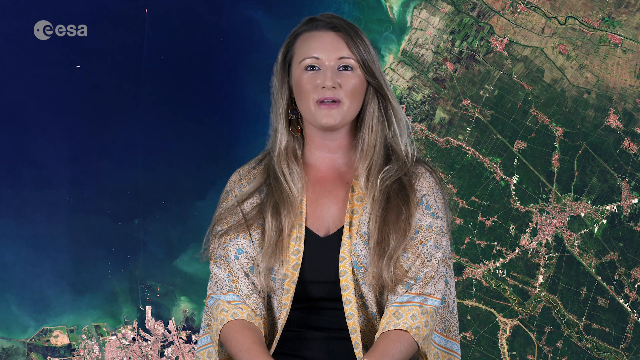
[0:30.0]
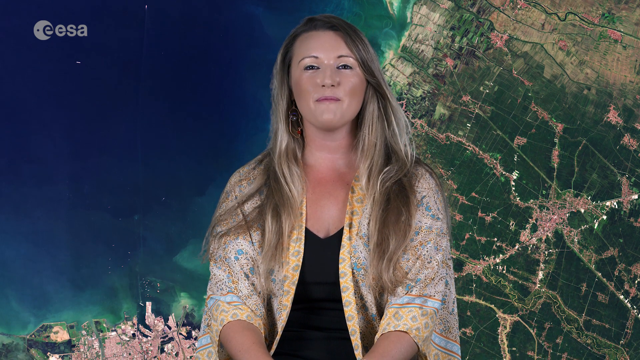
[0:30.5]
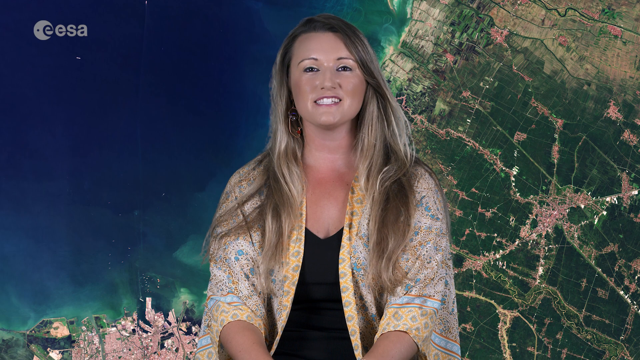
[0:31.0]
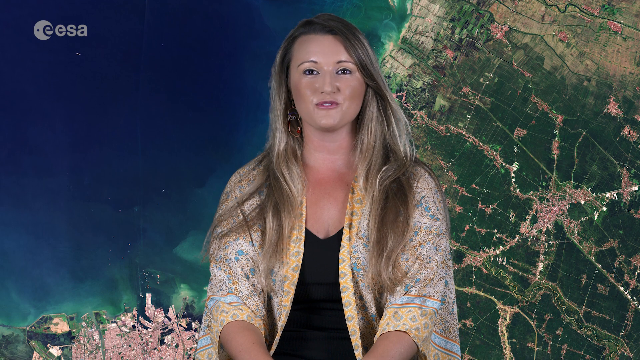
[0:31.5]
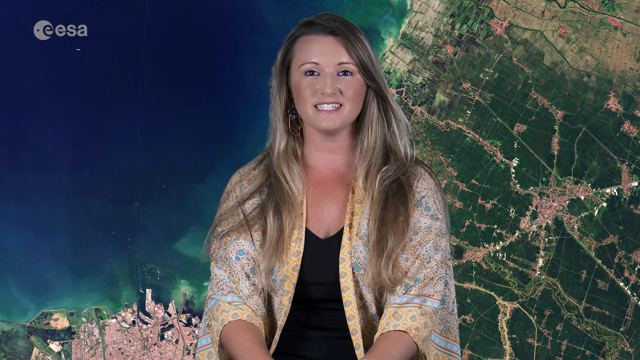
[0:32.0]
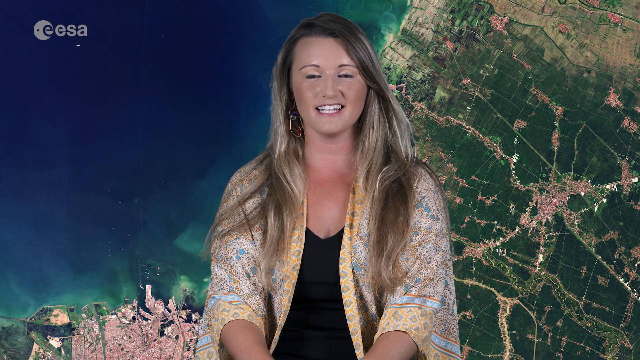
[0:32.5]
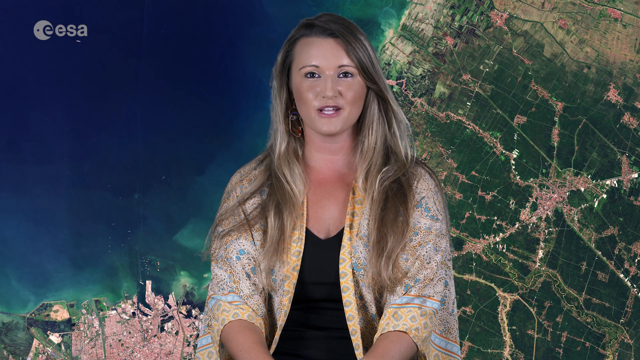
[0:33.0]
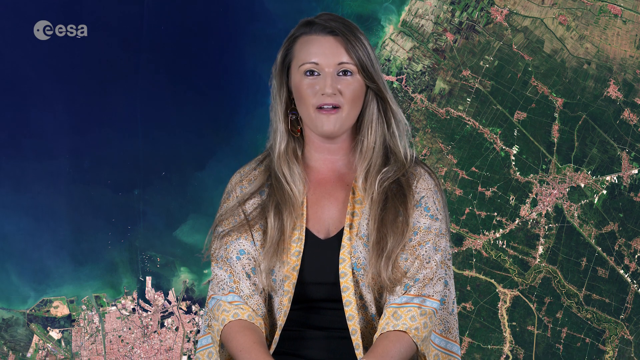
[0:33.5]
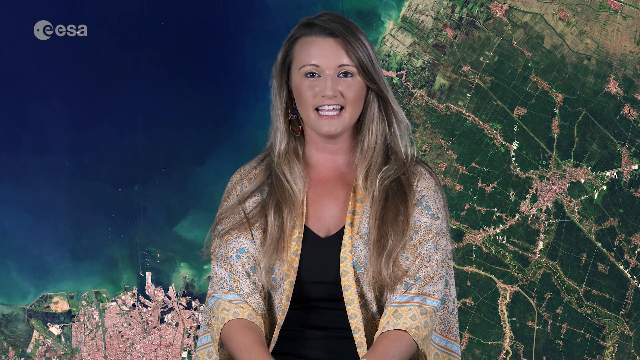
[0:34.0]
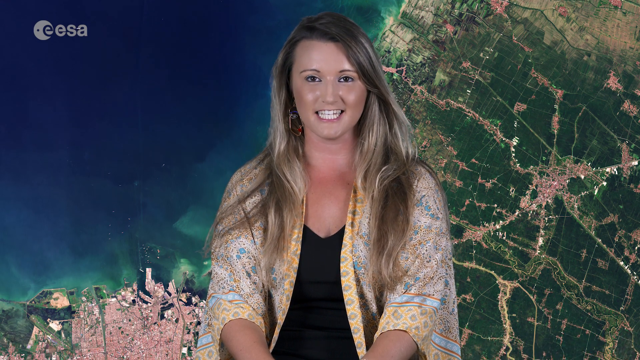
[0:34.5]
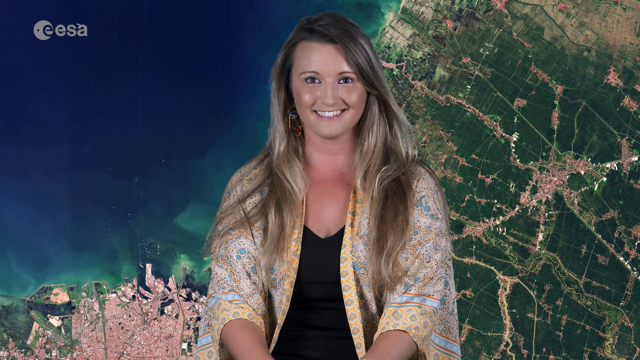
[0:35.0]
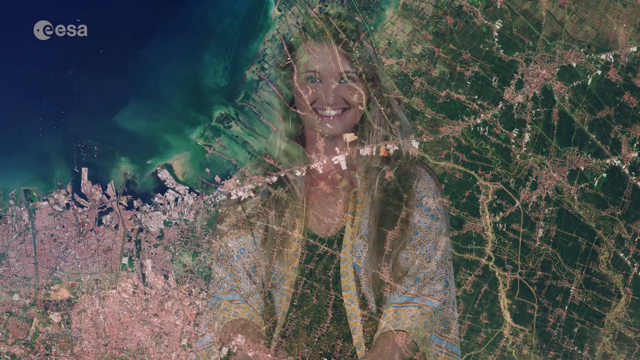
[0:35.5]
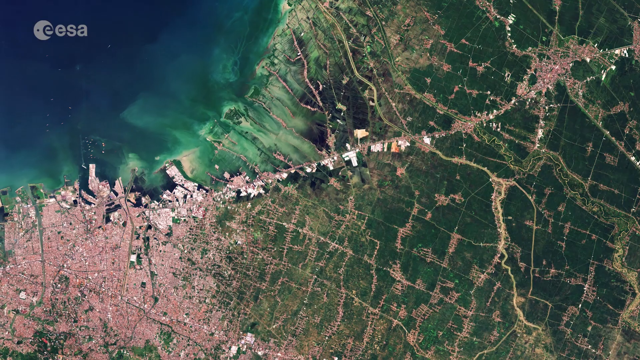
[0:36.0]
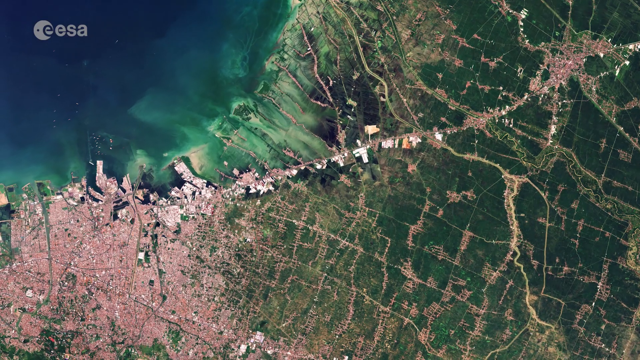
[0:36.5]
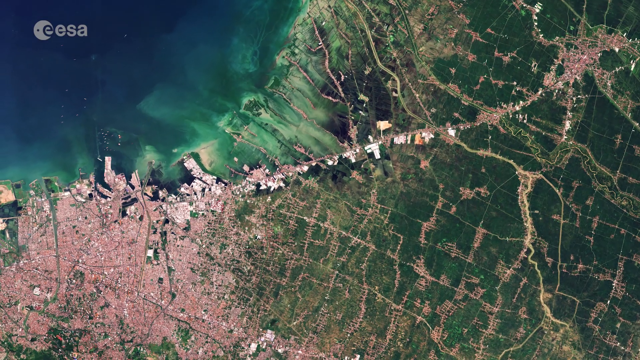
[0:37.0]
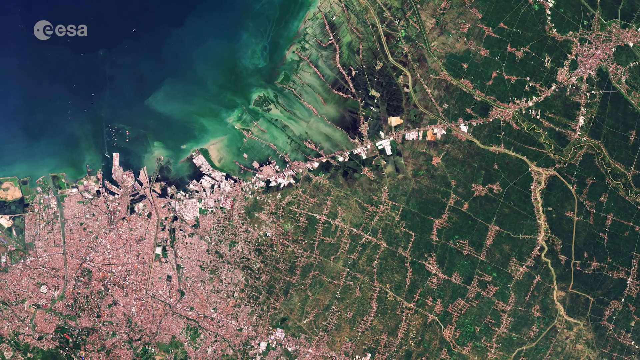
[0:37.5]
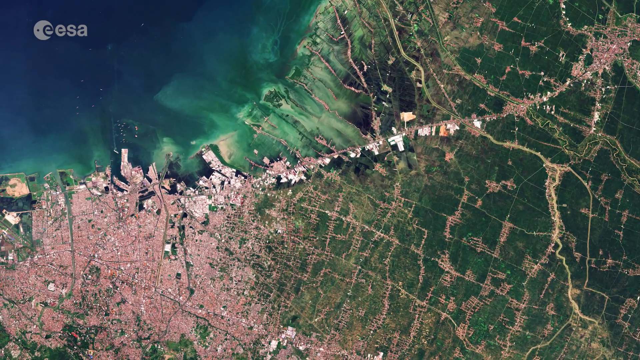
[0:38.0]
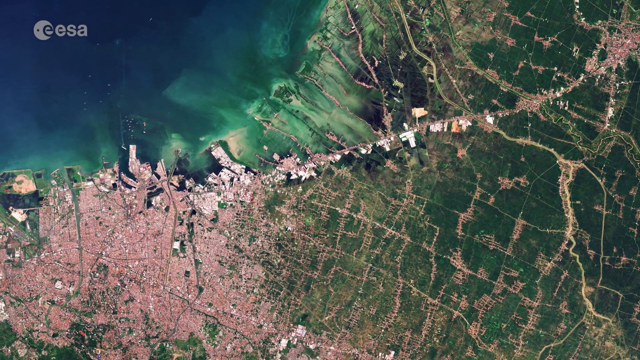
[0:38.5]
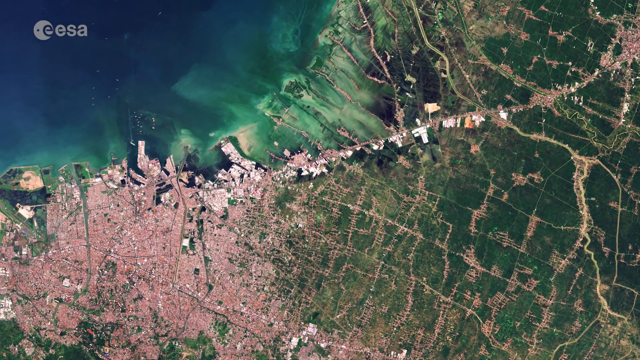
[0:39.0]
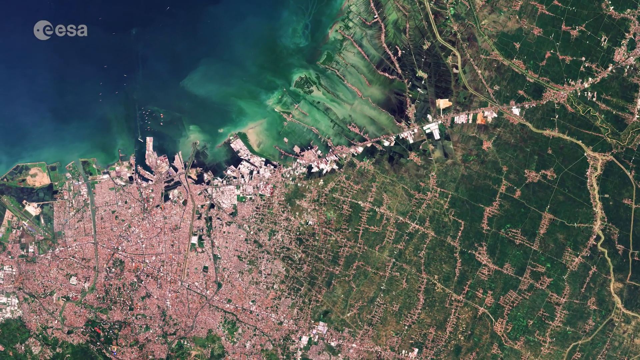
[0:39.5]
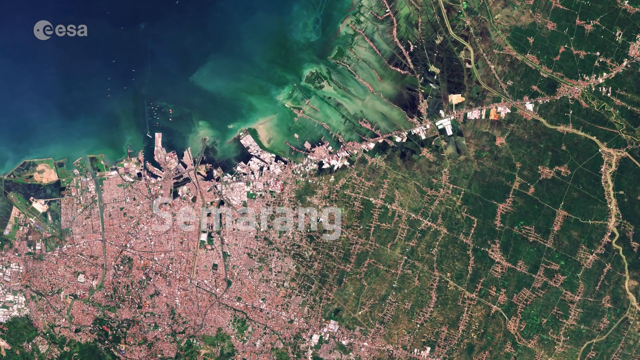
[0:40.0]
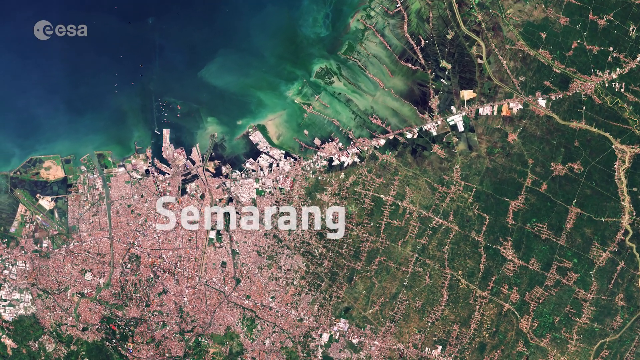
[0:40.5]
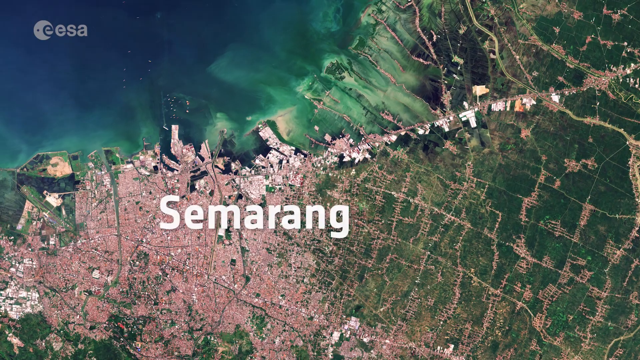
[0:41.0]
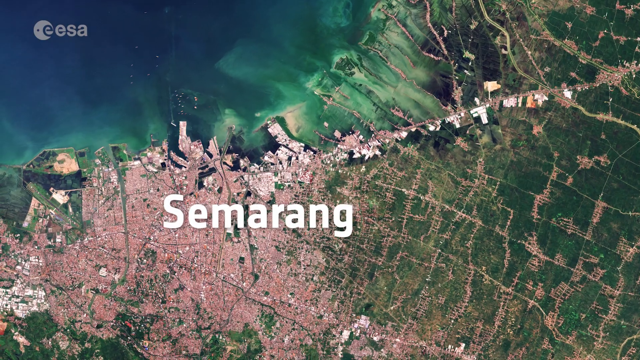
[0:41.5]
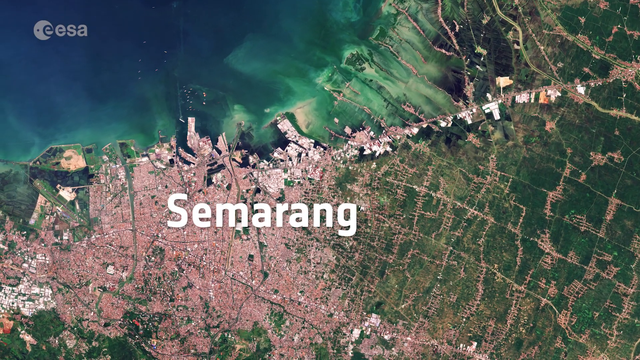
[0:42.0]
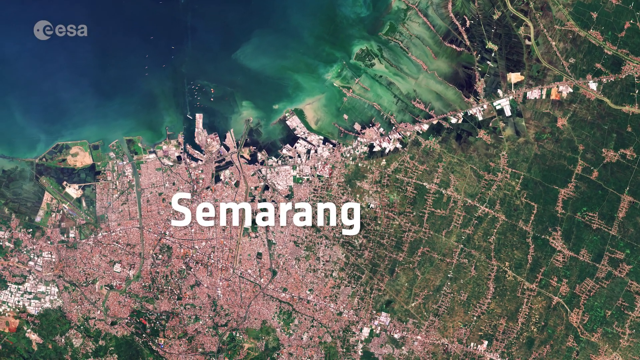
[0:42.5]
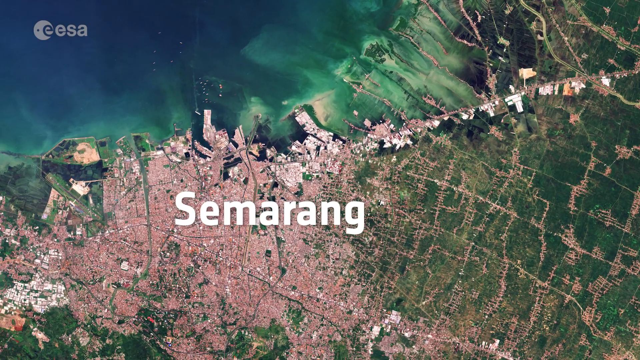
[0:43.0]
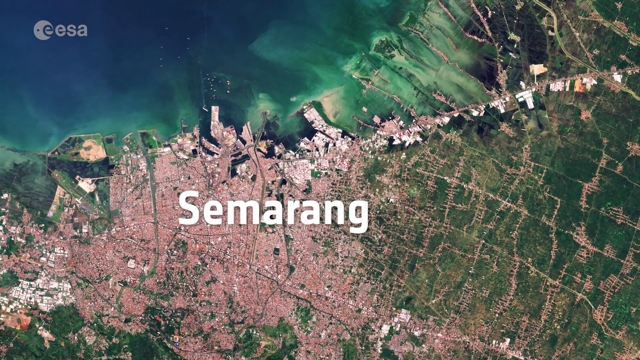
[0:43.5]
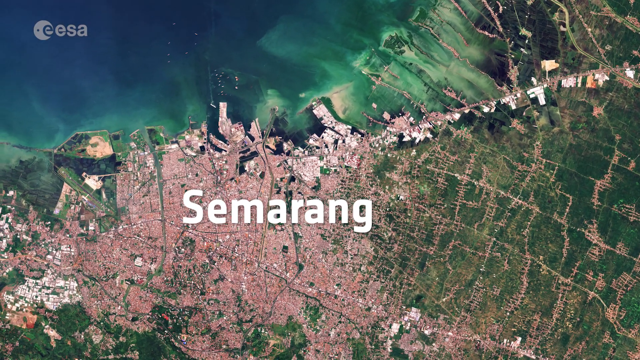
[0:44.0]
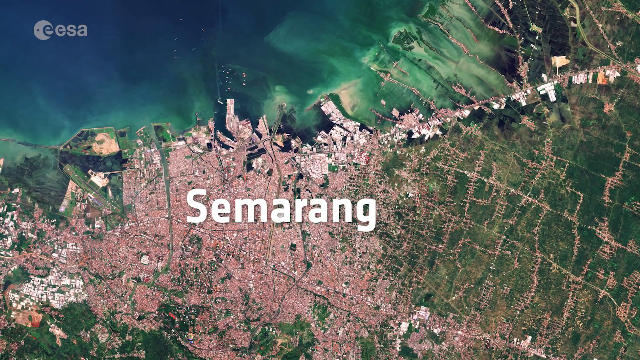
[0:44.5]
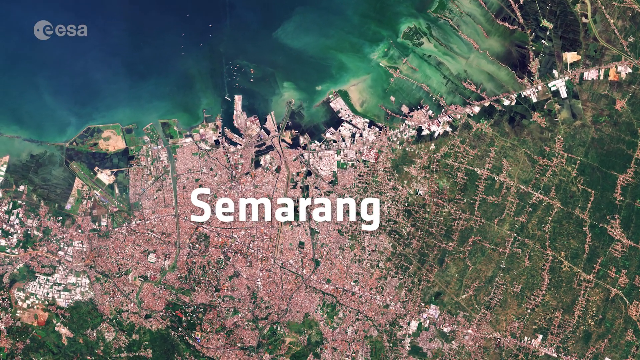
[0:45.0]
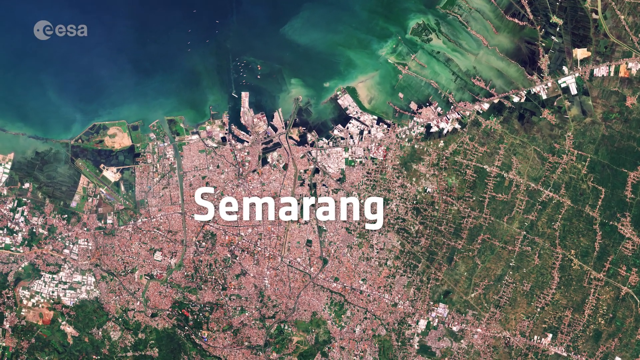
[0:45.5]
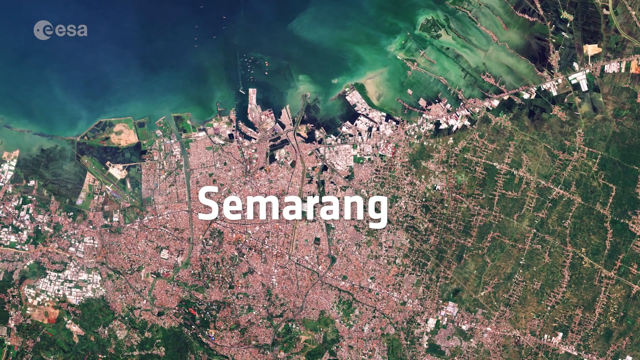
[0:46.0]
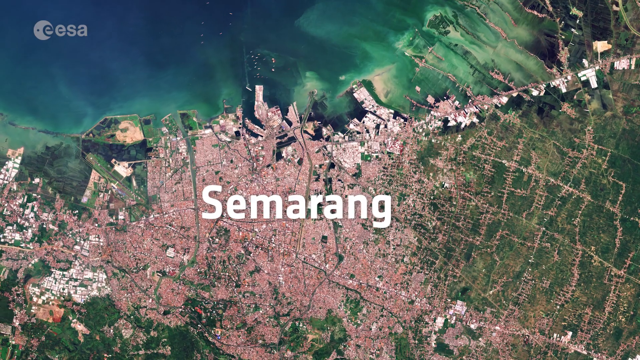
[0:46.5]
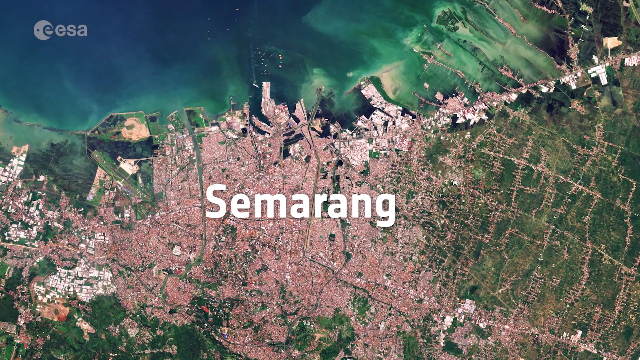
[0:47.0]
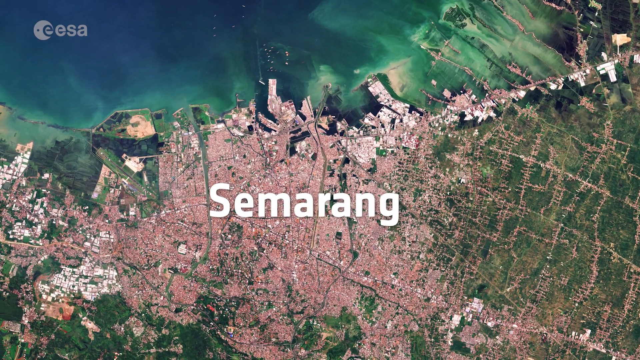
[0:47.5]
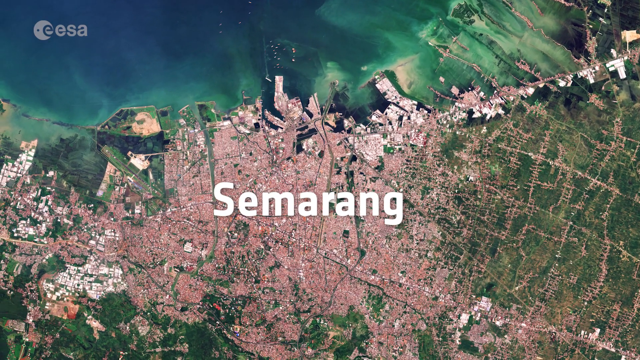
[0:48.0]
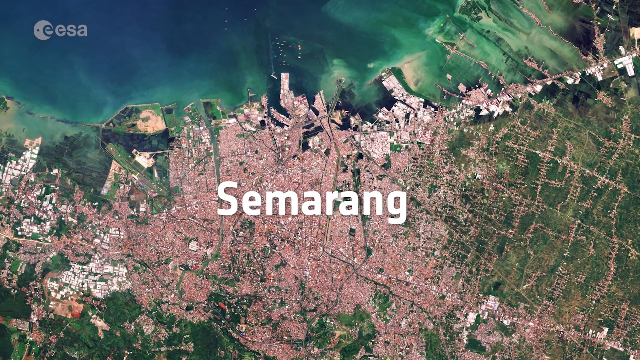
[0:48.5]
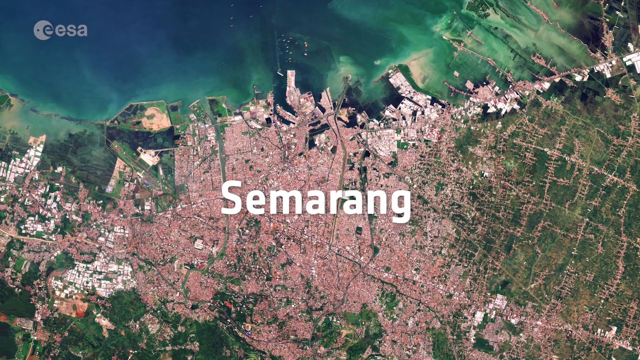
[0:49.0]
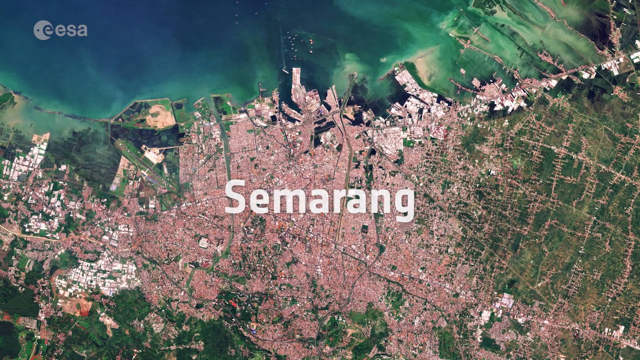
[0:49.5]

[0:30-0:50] The woman faces the screen, wearing a robe with many different colored patterns in light, sort of pale colors: yellow, blue and white. Behind her is sort of a poster of a globe with cities and blue water, with the letters "EESA" in the top left corner. She talks and smiles. The video then moves in and shows Semarang from a map perspective, so the whole city is visible, before cutting back to the woman. She has long, sort of blonde-gray hair and light pink lipstick, and seems to have a bit of a suntan on her chest area. The city representation behind her is like an overhead map view zoomed in very close, showing lines of subdivisions and separations between different cities, lots and places in the area.